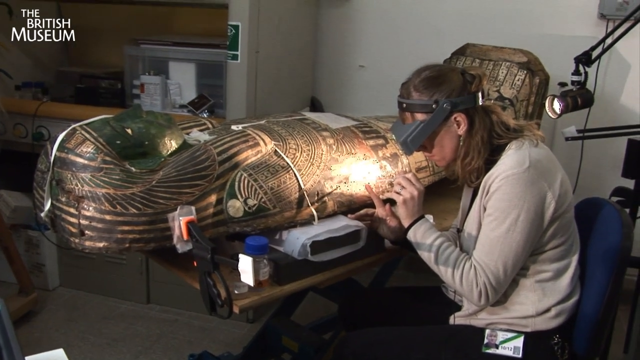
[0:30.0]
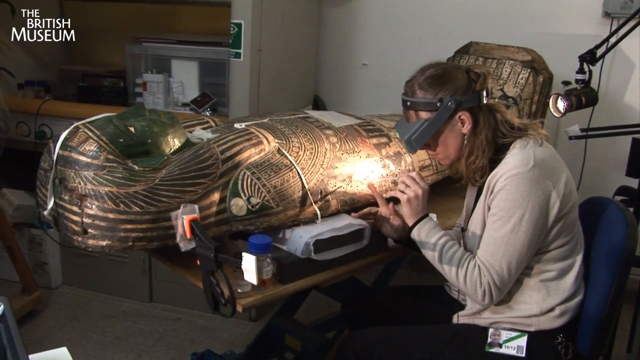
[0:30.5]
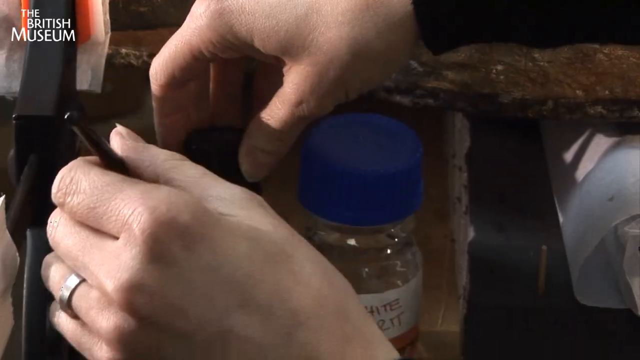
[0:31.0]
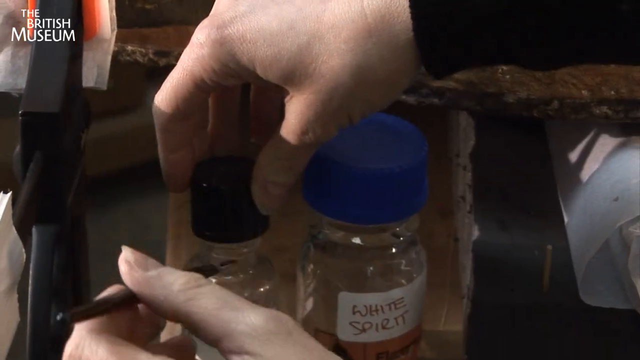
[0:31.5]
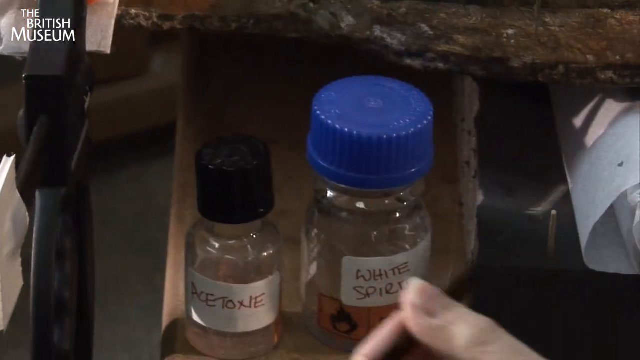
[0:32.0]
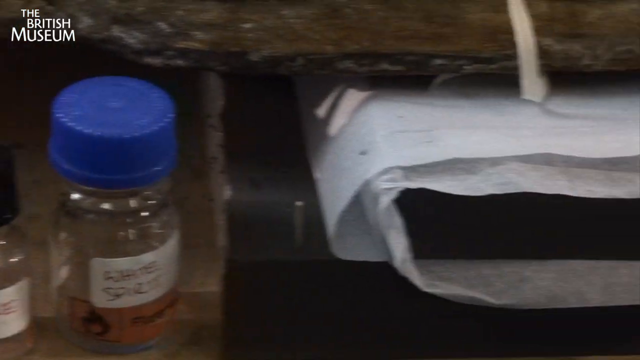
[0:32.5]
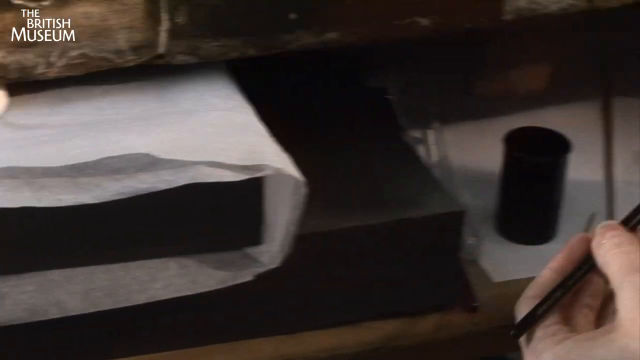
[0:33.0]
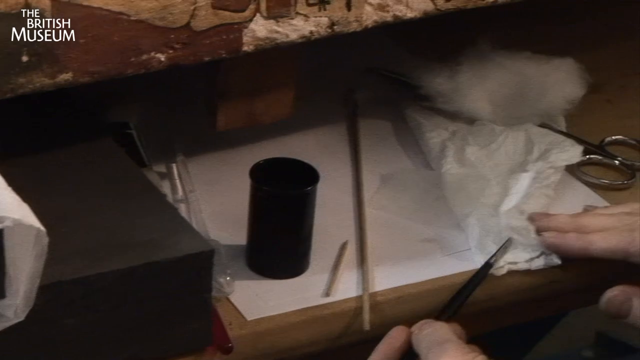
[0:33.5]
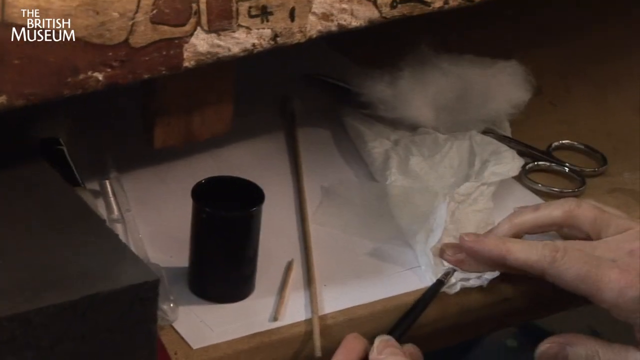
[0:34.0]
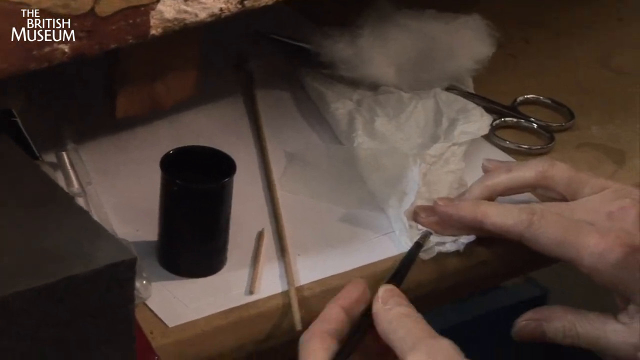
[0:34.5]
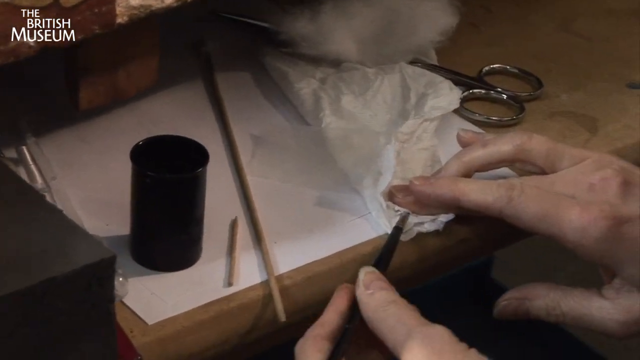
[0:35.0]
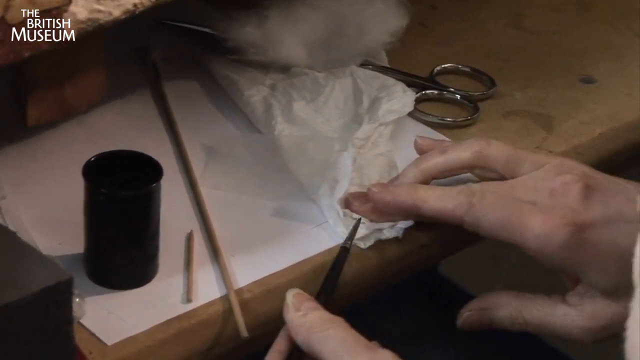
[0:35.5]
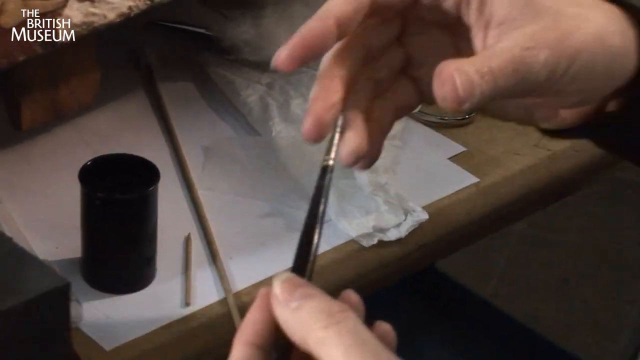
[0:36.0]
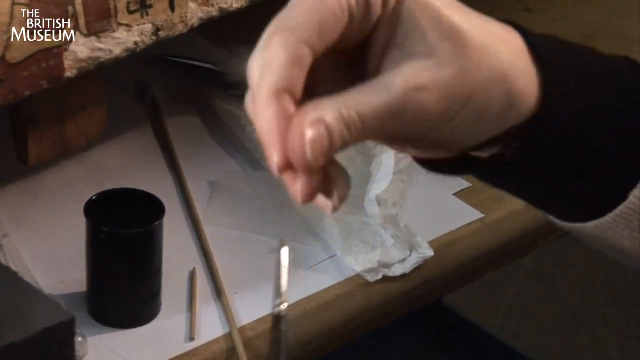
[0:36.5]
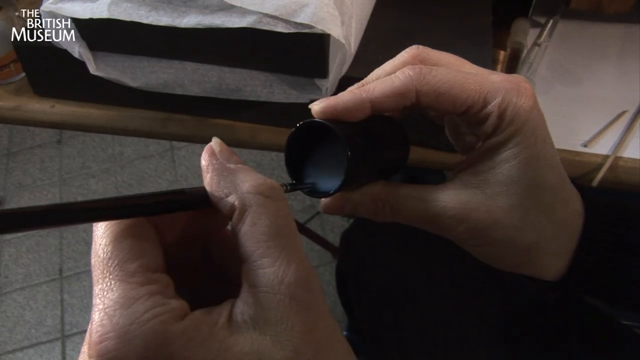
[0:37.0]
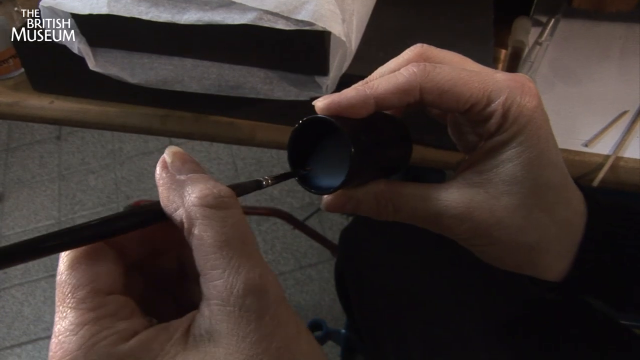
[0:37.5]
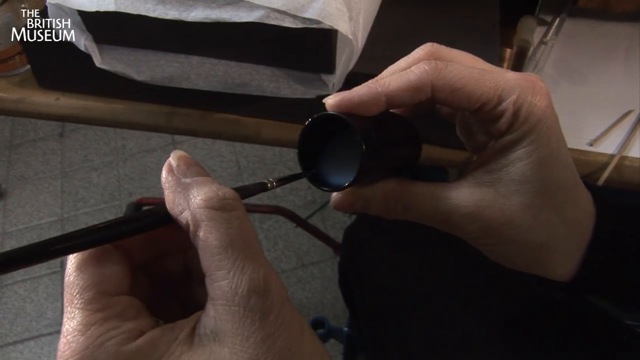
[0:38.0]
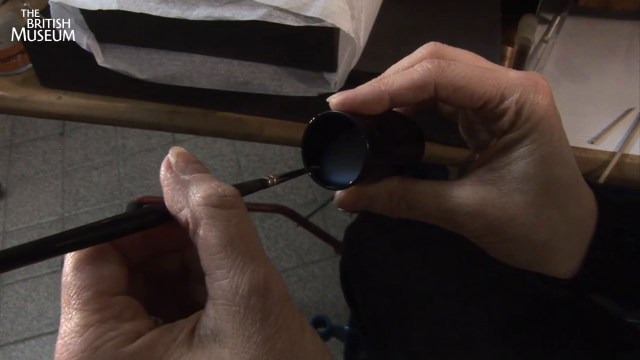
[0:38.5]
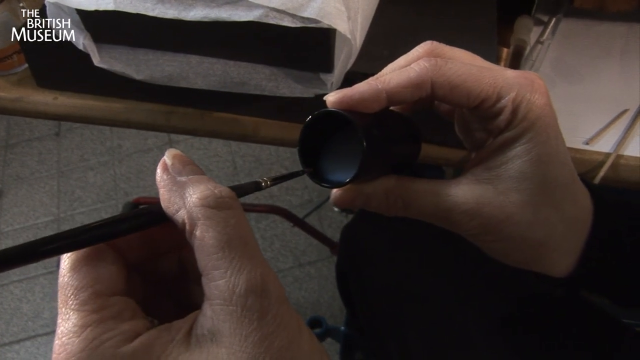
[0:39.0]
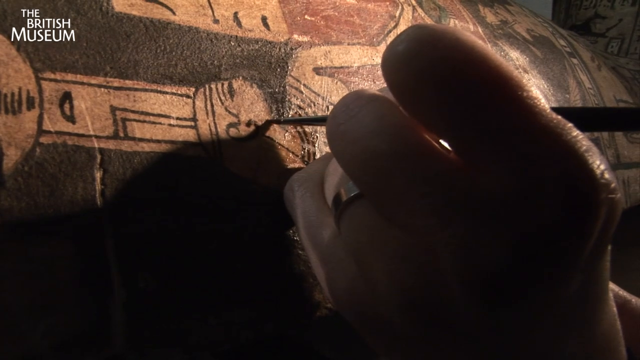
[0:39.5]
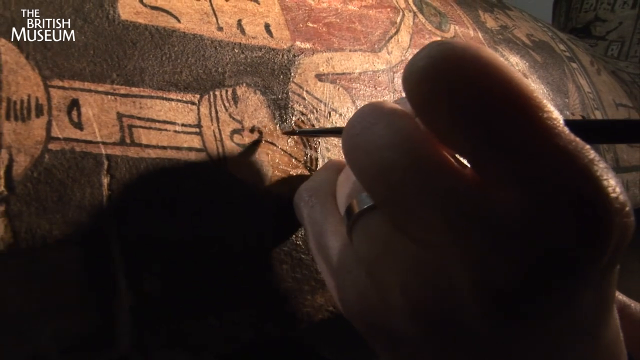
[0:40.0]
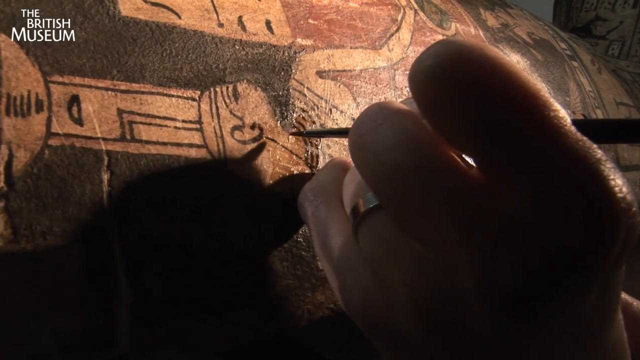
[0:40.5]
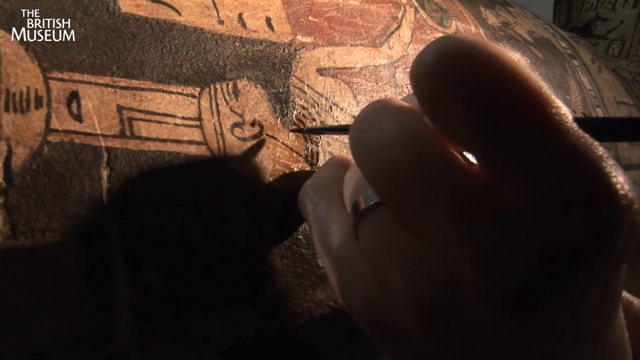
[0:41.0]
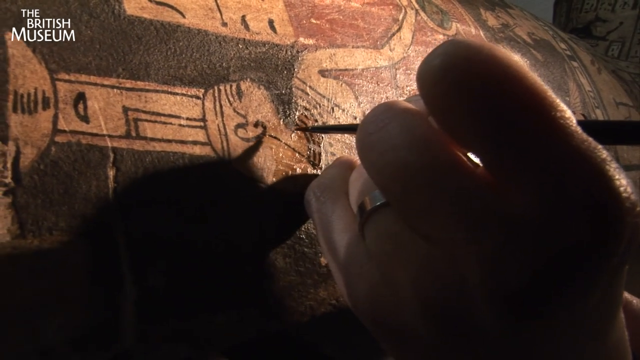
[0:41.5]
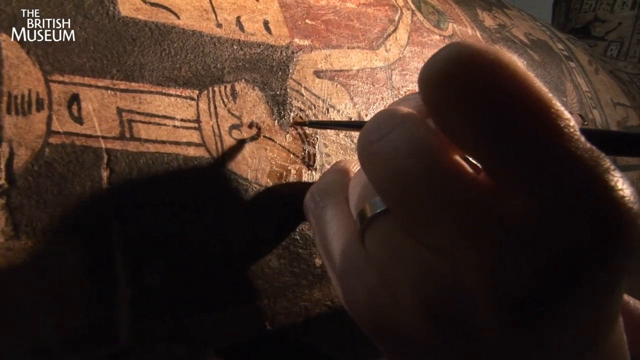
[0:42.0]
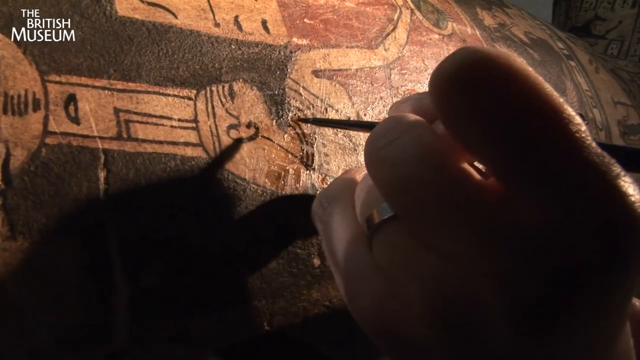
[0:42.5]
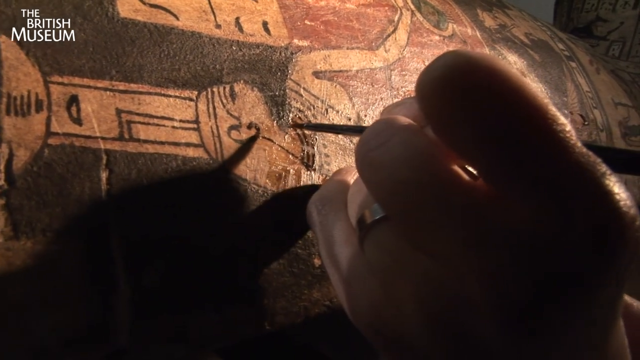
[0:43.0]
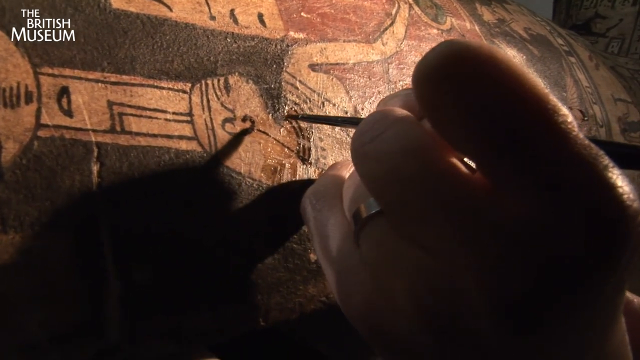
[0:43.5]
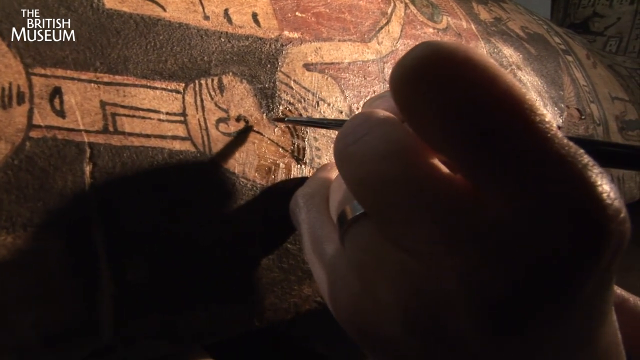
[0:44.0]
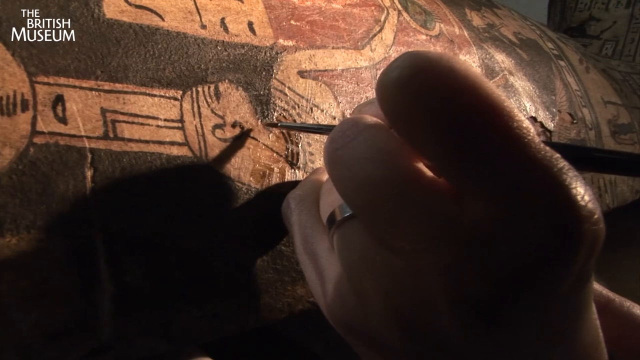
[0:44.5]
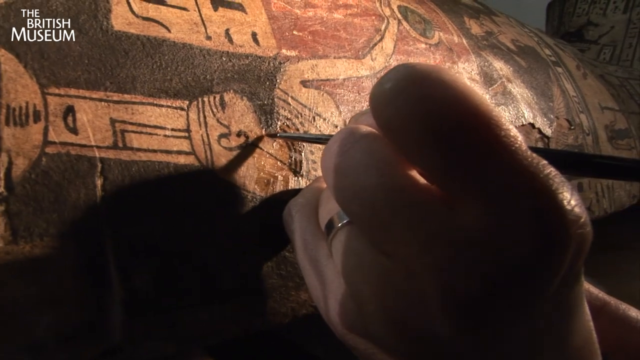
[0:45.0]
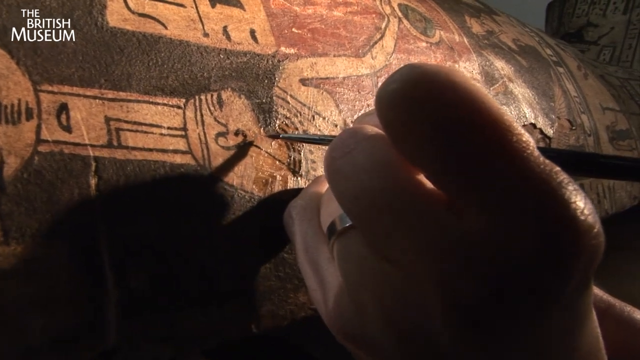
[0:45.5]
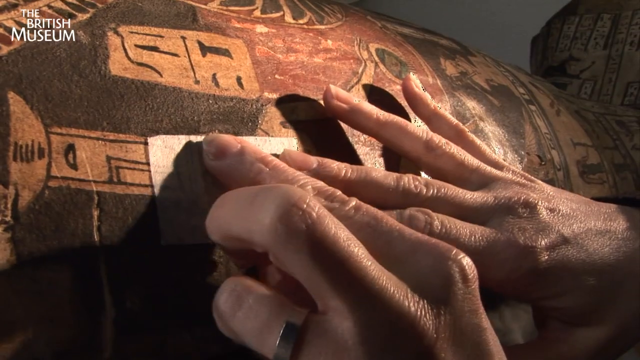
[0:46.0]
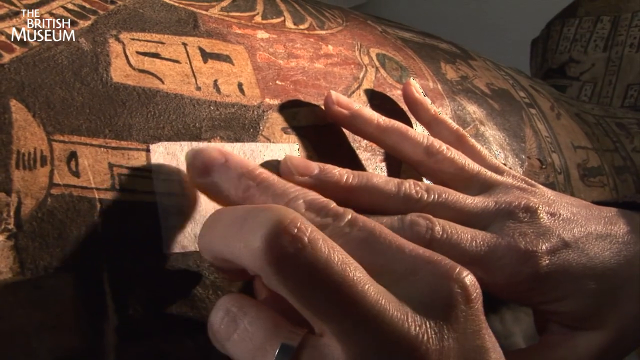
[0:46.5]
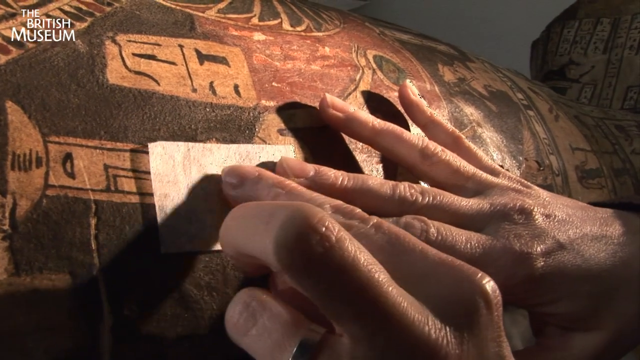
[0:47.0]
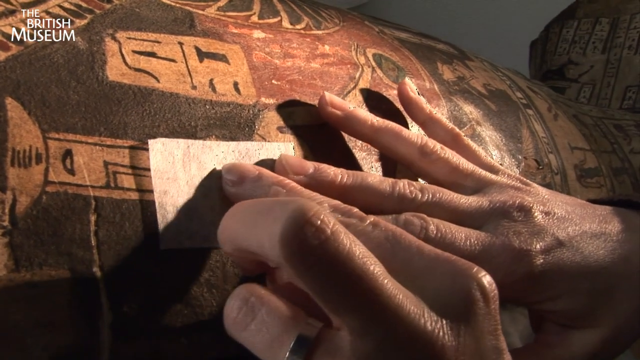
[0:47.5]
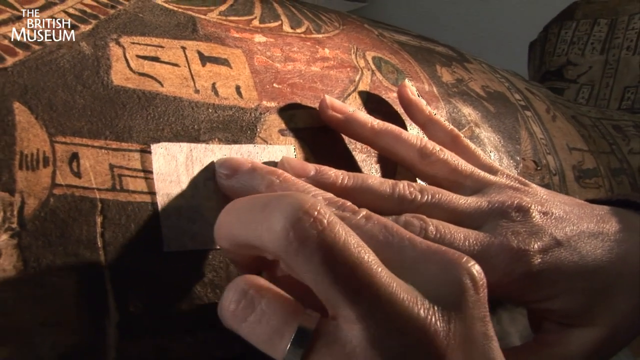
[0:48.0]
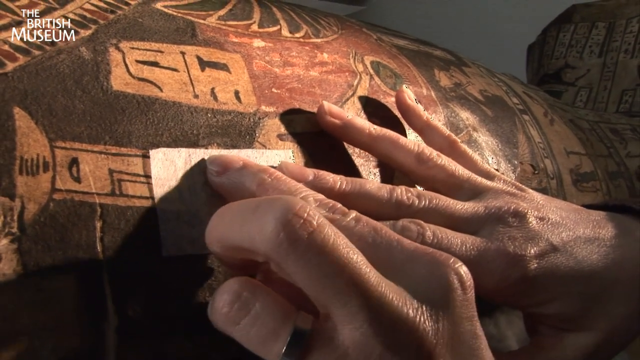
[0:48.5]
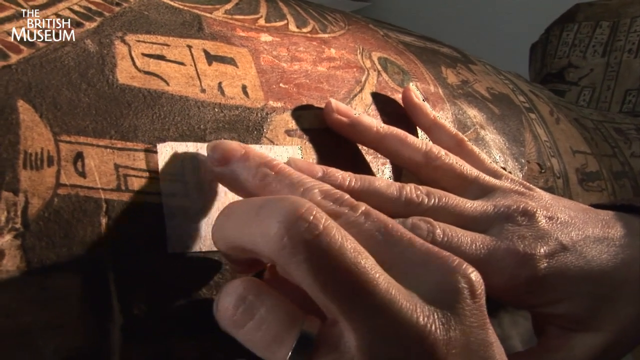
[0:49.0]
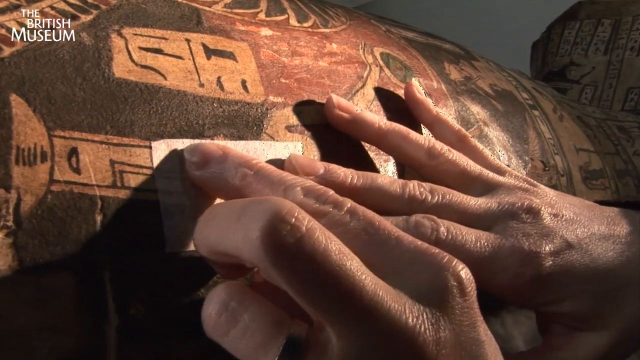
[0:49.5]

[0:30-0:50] The woman takes something out of a bottle containing a clear liquid, then dips it into another bottle holding something that looks milky white, though it is hard to tell. She then takes a piece of some type of paper and puts it into the coffin. It is hard to tell whether she is cleaning it or adding color, but she apparently is adding color. Her work looks painfully detailed, and she seems totally engrossed in it.